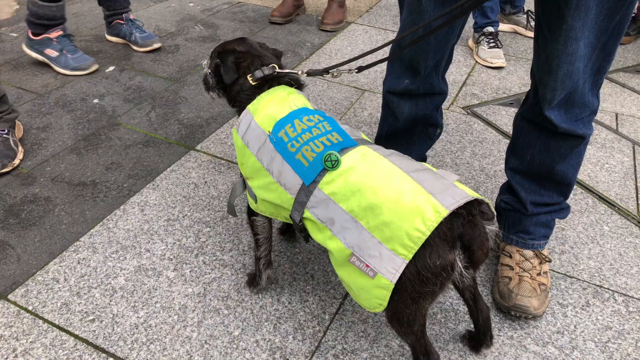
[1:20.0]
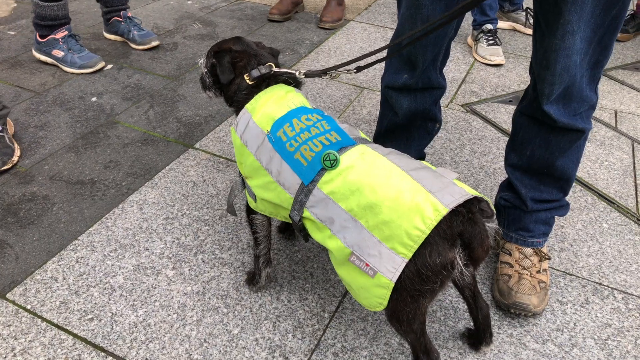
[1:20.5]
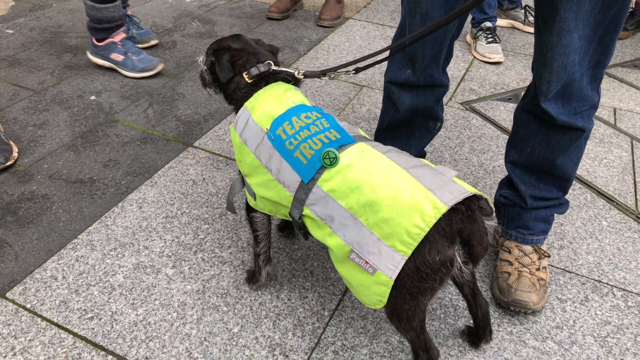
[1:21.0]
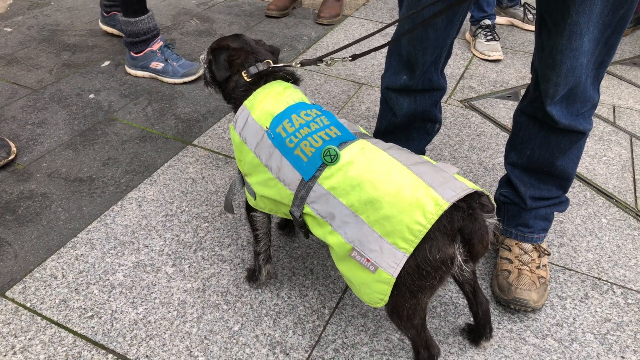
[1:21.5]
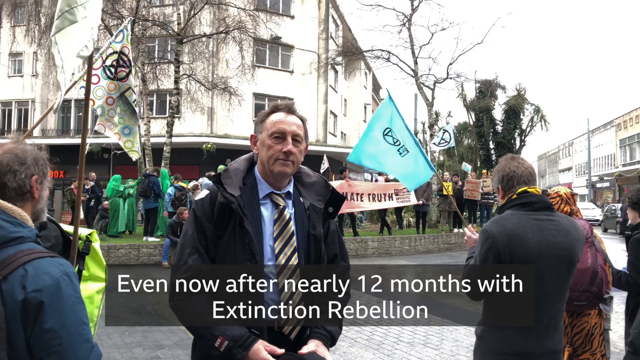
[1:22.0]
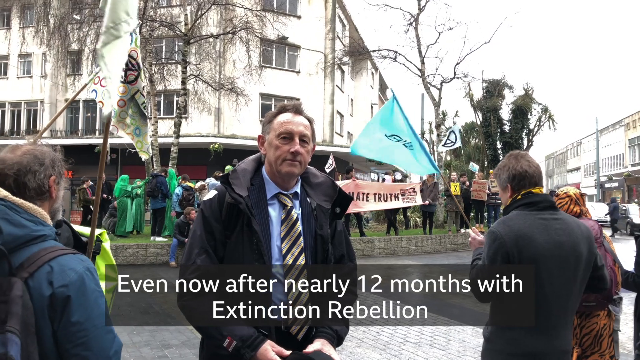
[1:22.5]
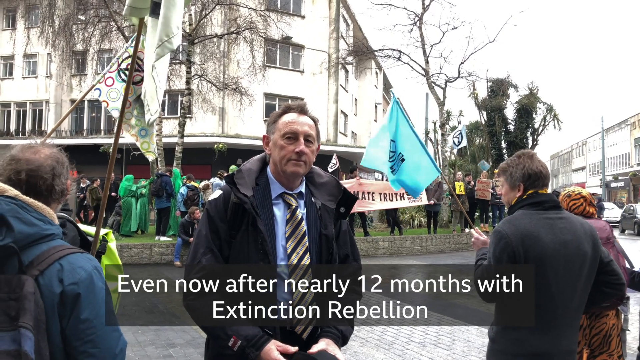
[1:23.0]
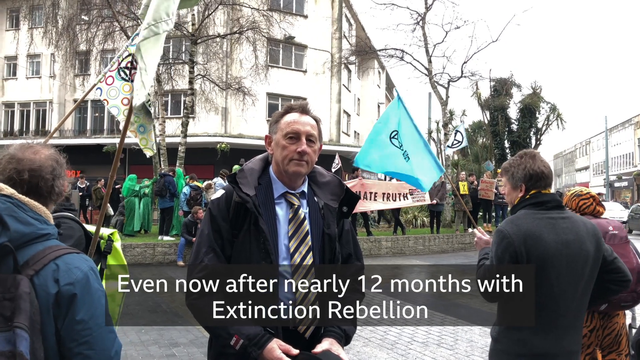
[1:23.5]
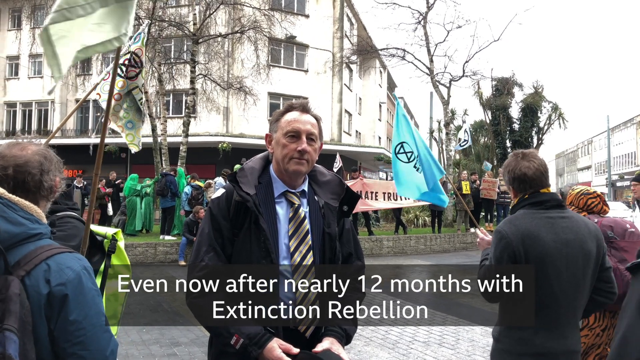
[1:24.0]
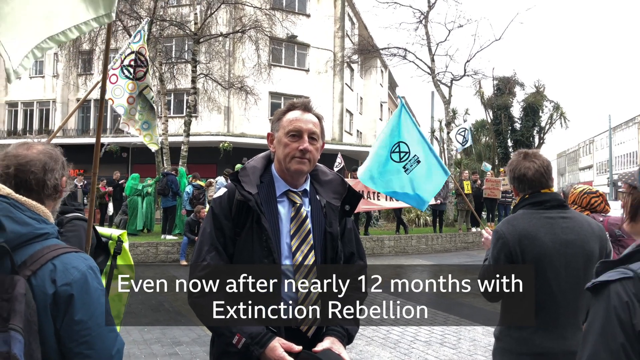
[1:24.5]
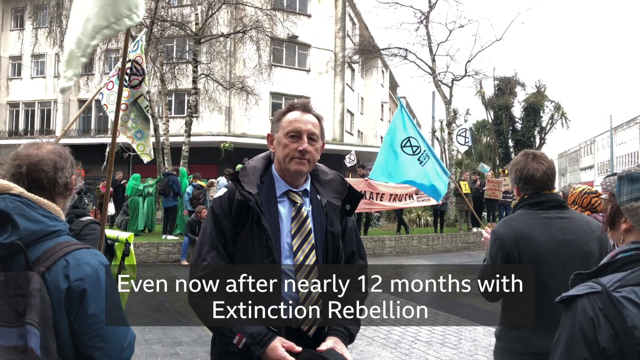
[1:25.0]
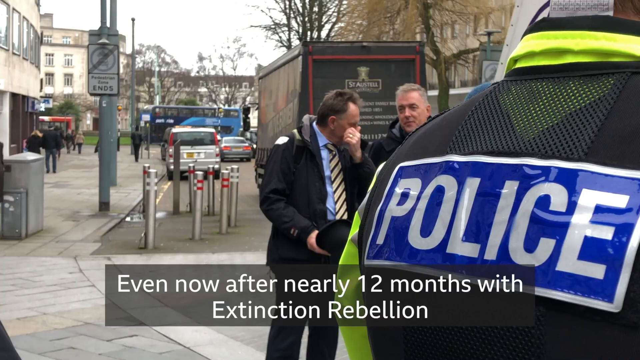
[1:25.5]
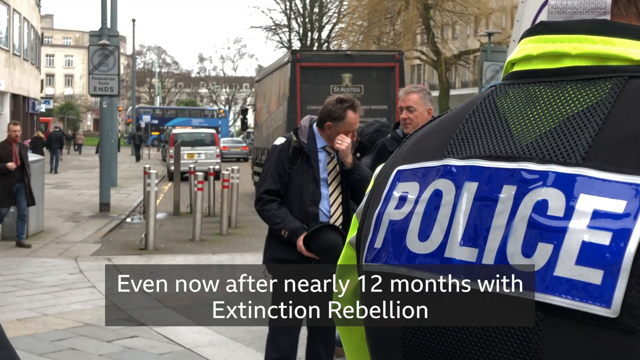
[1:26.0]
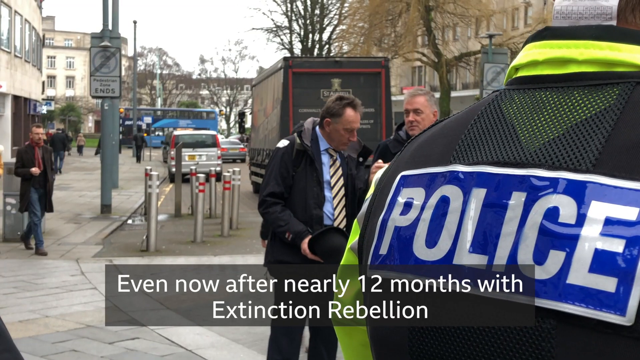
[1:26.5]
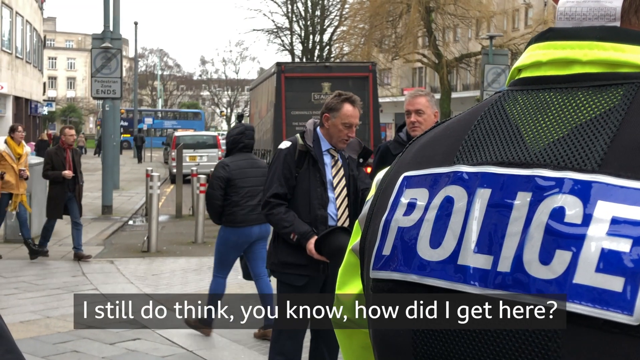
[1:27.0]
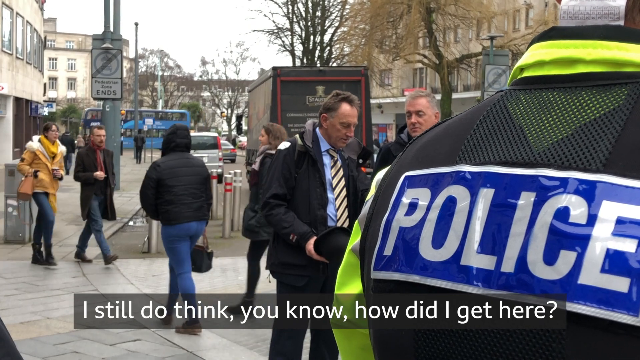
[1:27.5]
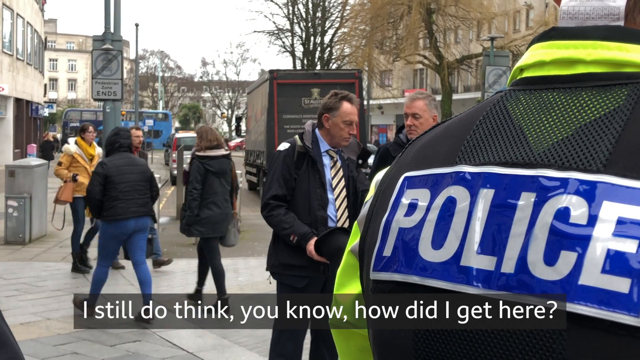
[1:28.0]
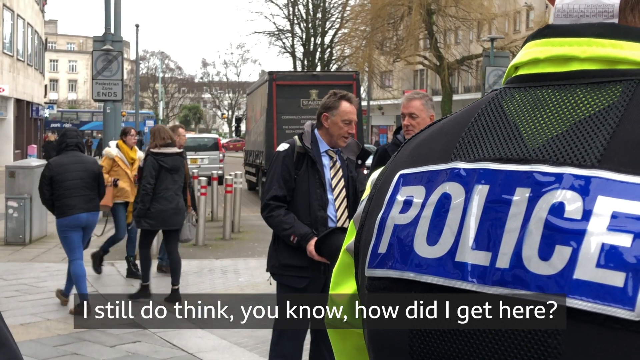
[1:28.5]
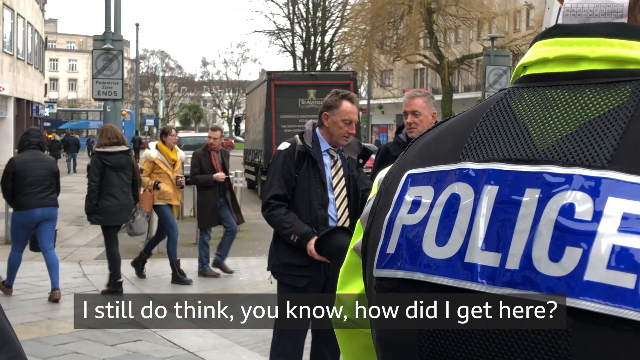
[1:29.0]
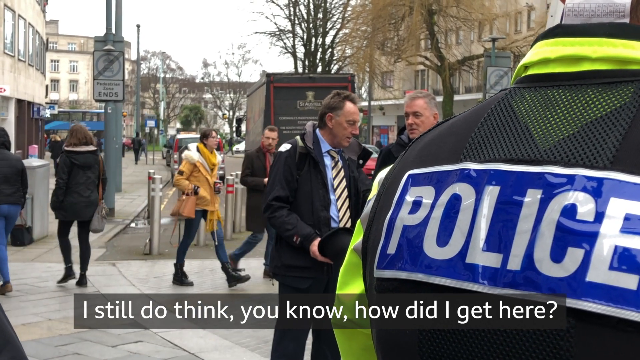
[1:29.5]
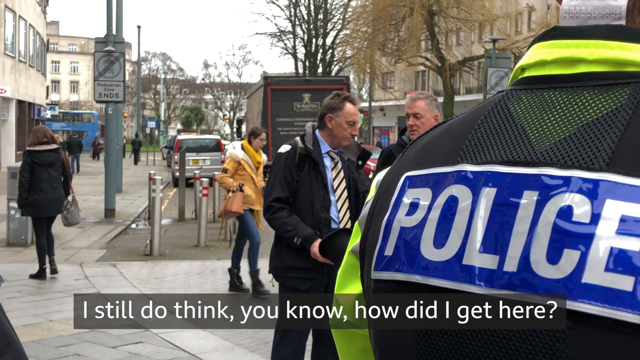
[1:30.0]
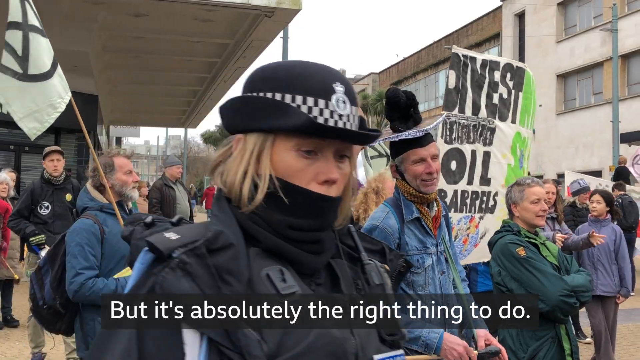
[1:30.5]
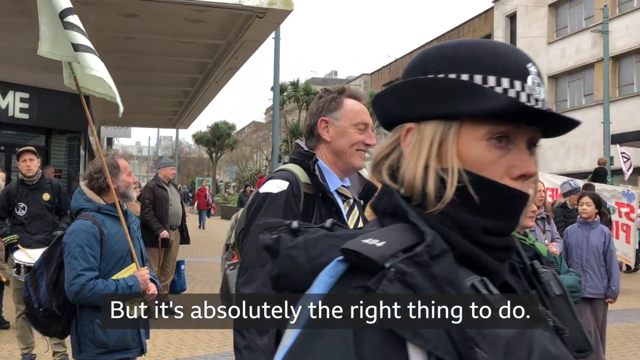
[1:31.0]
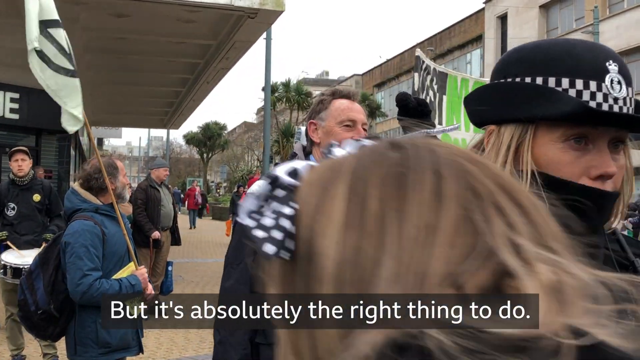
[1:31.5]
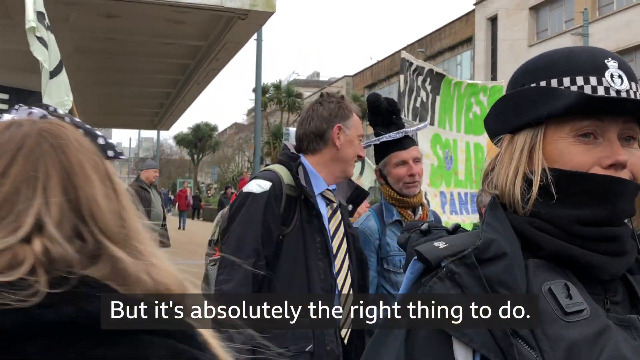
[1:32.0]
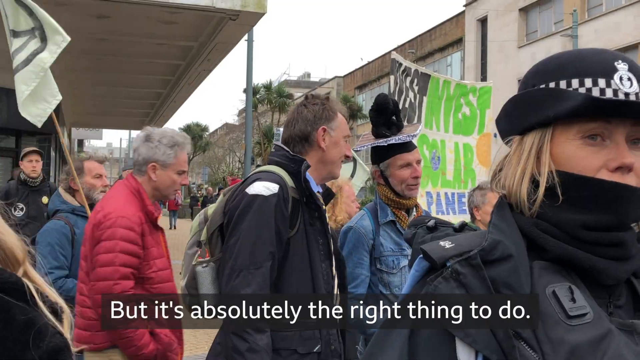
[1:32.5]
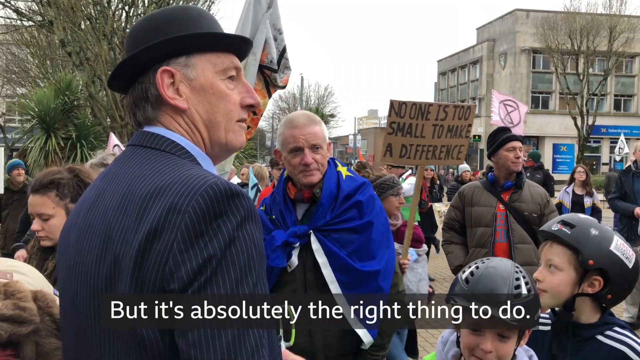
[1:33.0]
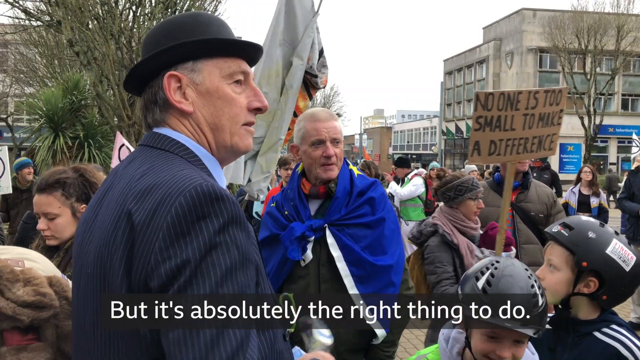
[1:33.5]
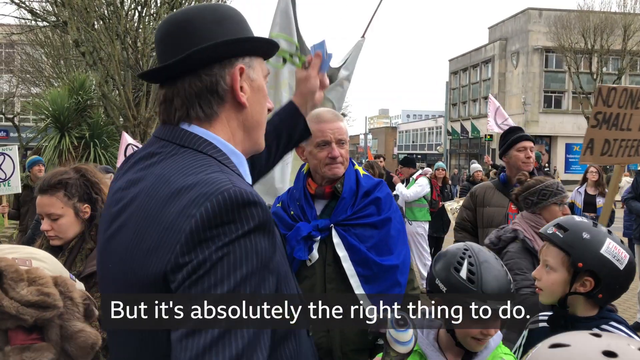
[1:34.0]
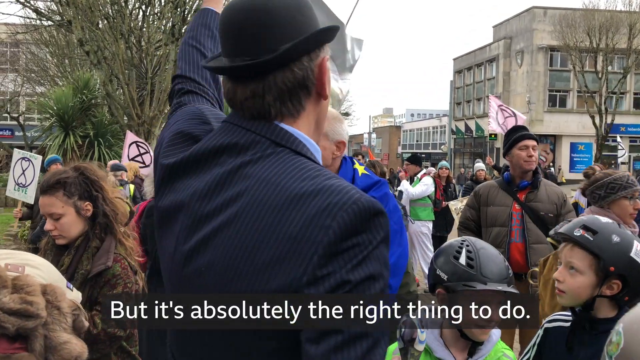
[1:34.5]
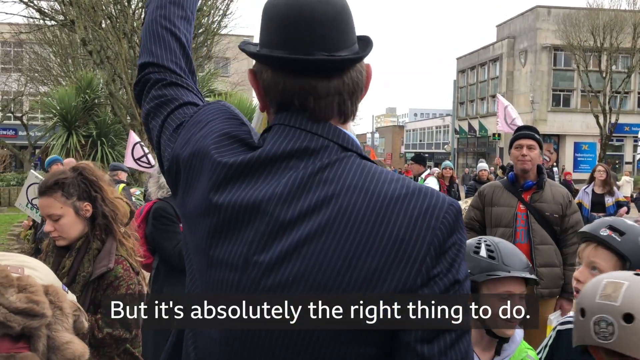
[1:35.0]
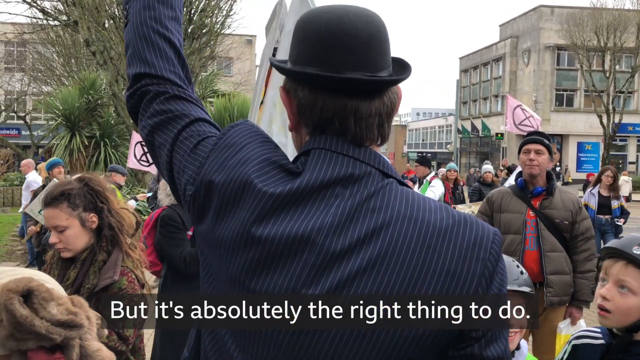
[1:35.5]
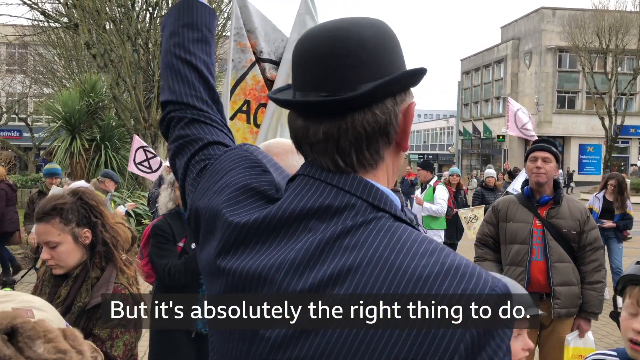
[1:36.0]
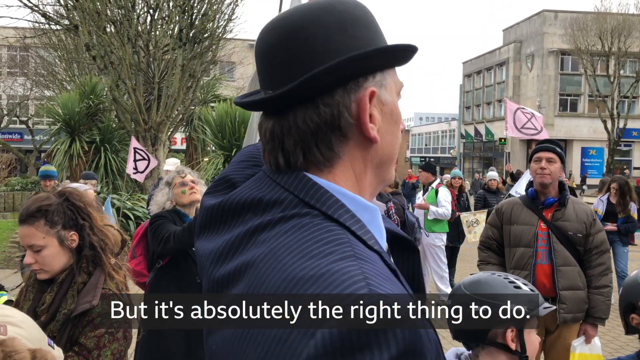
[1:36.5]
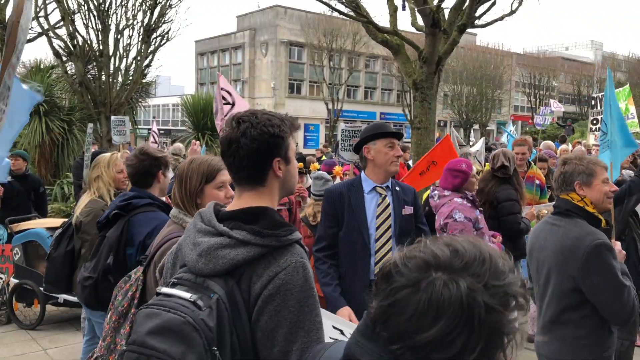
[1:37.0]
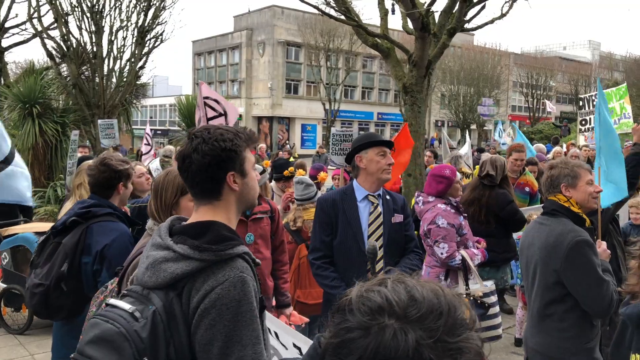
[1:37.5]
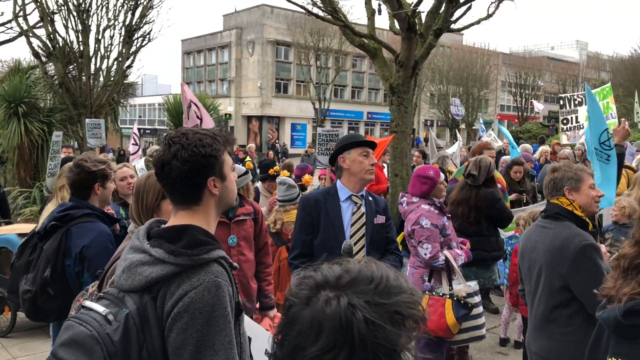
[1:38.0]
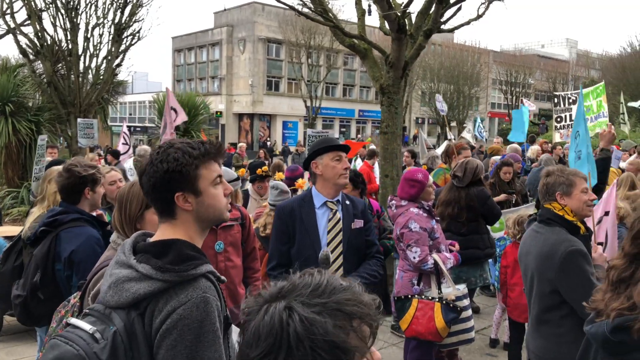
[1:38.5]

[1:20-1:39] A dog is viewed from above, wearing a yellow safety vest strapped around its body and covering it from its neck to its tail. A blue square of fabric is attached to the dog's back over the safety vest, with writing on it that reads "teach climate truths". Standing beside the dog are a man's legs in denim and brown shoes. A man then stands at a street corner in a black weather jacket with a diagonally striped tie, looking at the camera, while the back of a police officer's vest with the word "police" written on it is visible. Next comes a side view of the man at the corner. A policewoman stands at the right side of the frame in a black police hat with a checkered headband around it. People walk all around with protest signs. A man in a bowler hat and a suit stands prominently in the middle of the frame, surrounded by scores of people.